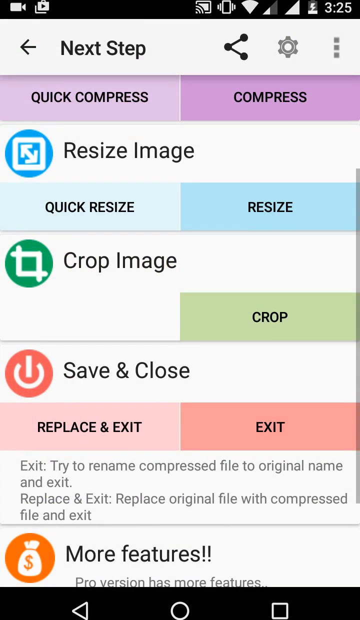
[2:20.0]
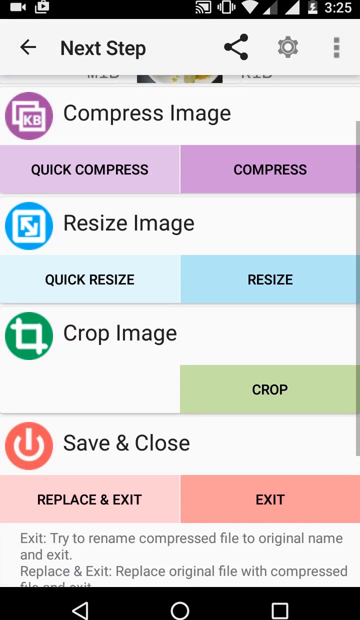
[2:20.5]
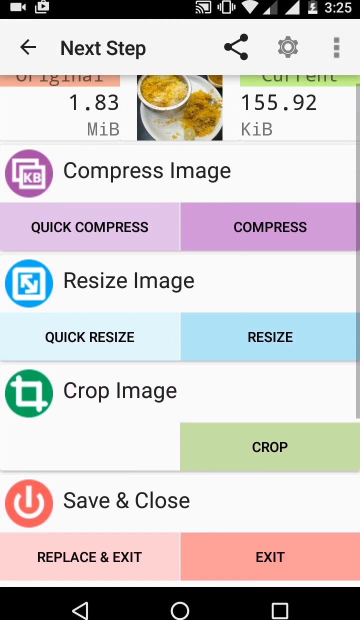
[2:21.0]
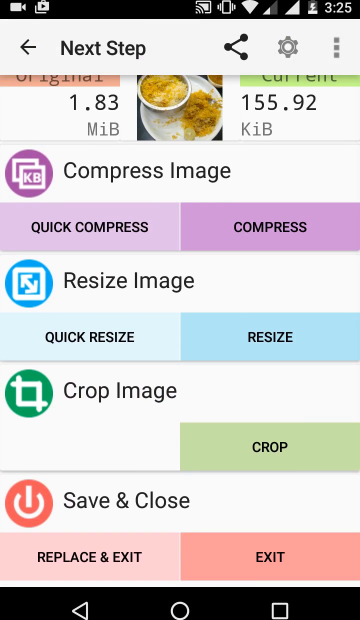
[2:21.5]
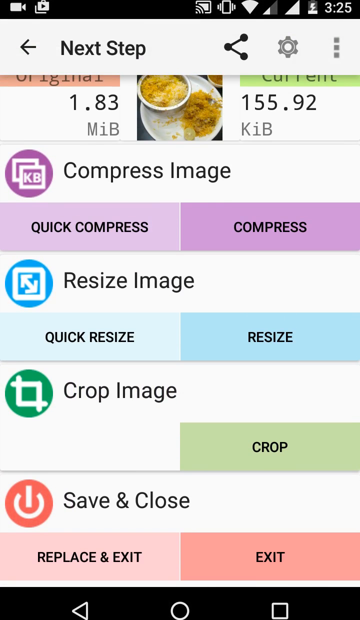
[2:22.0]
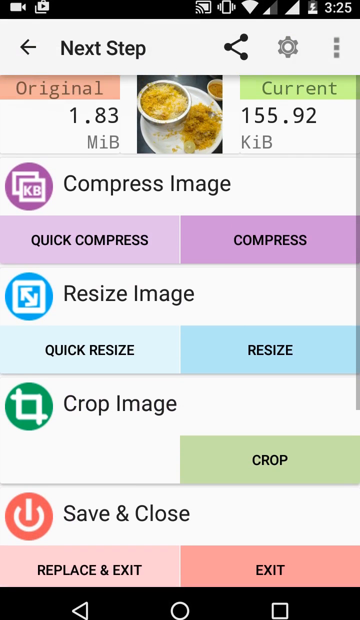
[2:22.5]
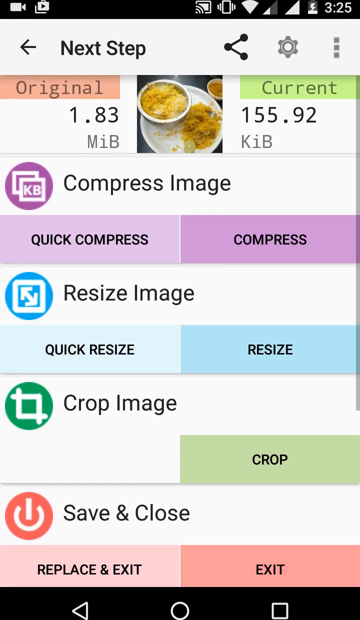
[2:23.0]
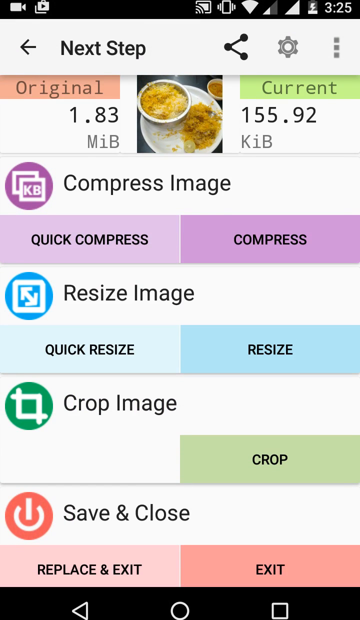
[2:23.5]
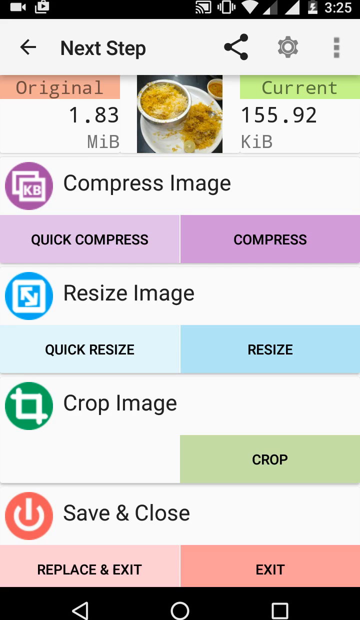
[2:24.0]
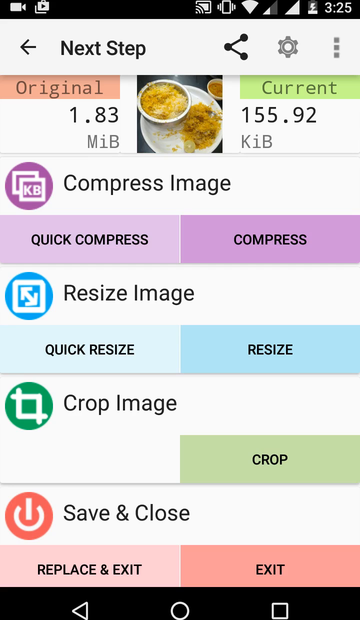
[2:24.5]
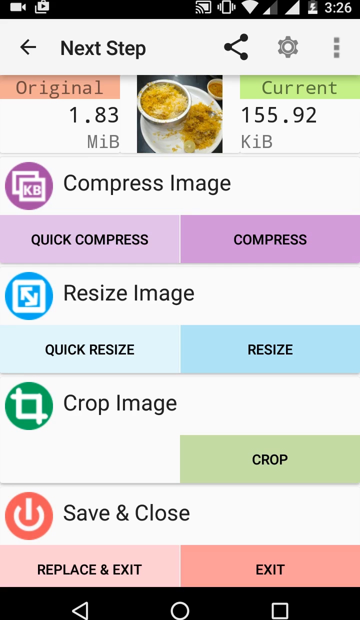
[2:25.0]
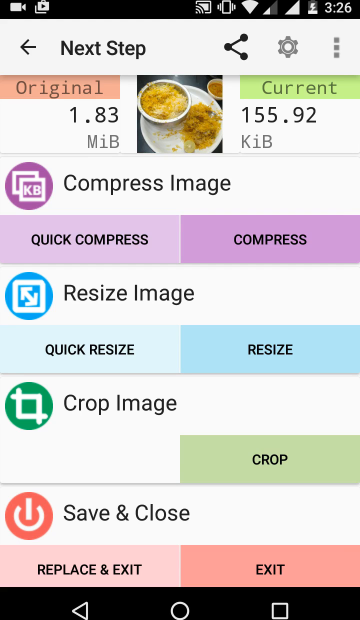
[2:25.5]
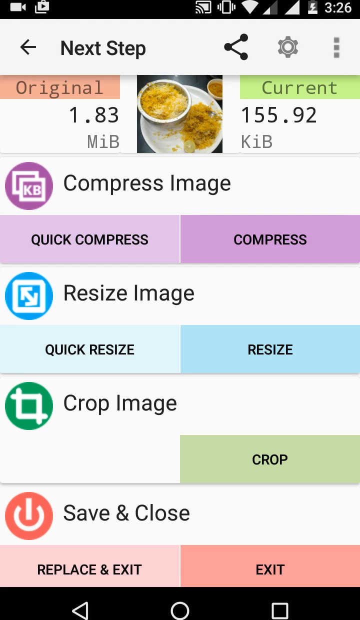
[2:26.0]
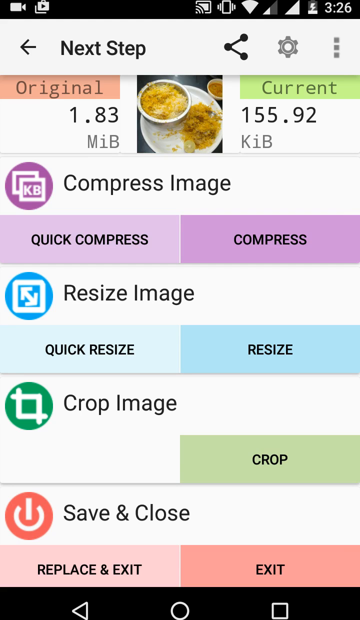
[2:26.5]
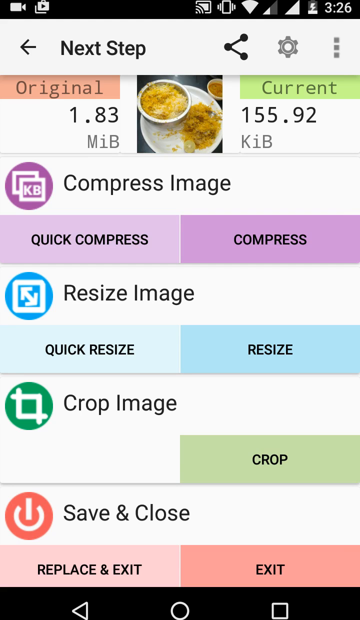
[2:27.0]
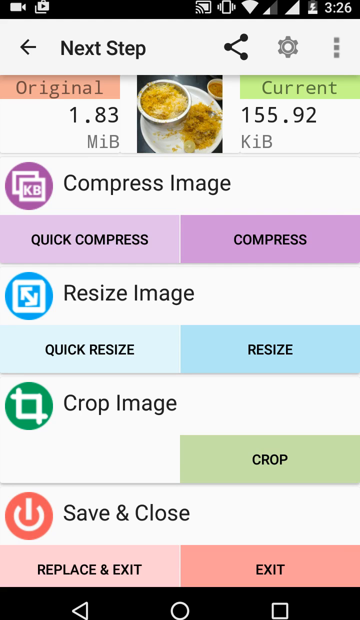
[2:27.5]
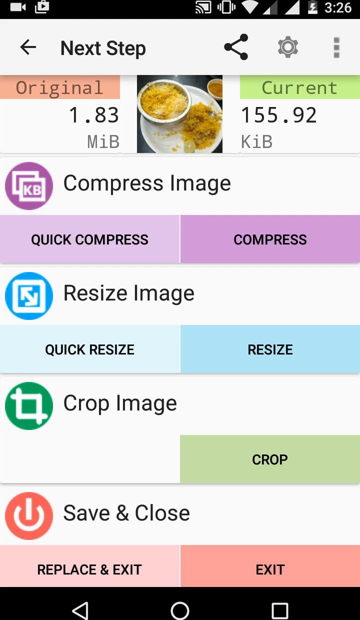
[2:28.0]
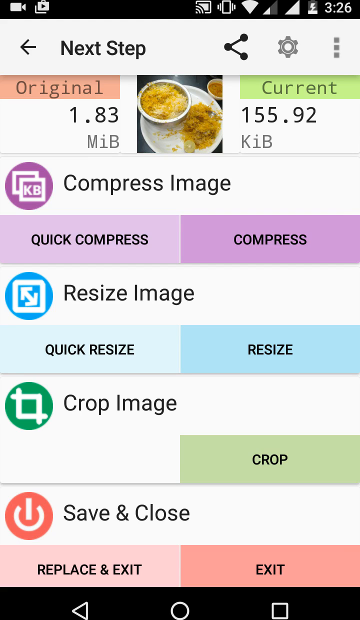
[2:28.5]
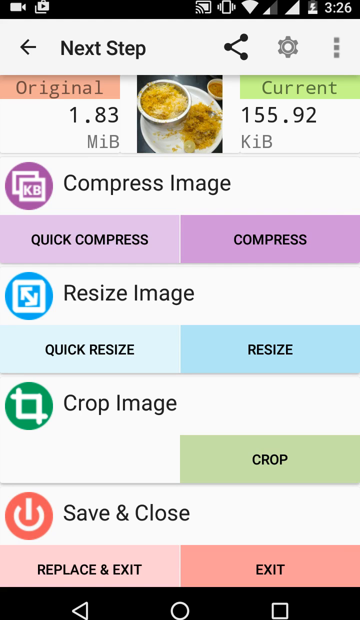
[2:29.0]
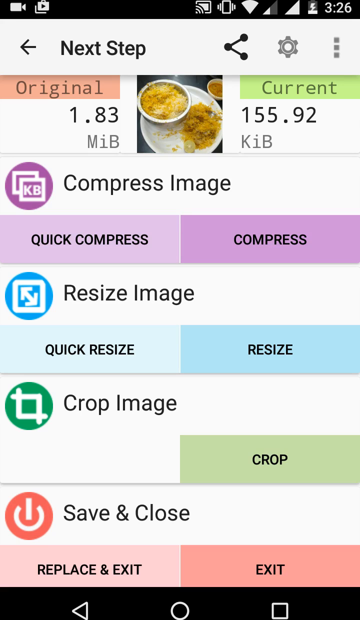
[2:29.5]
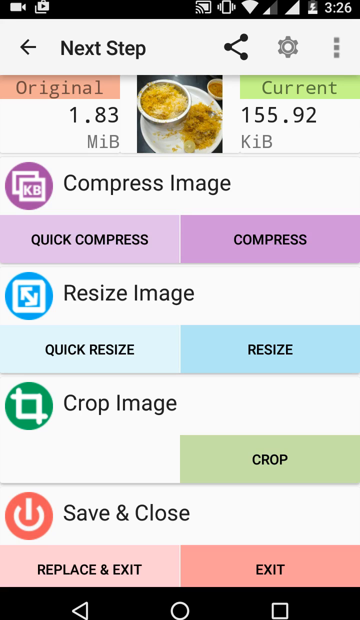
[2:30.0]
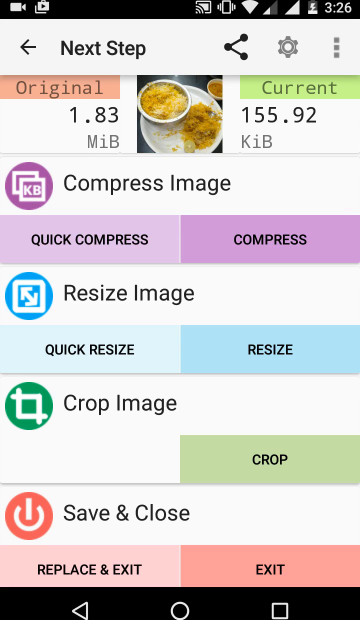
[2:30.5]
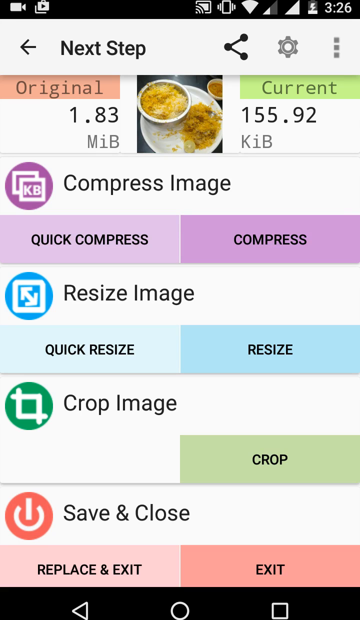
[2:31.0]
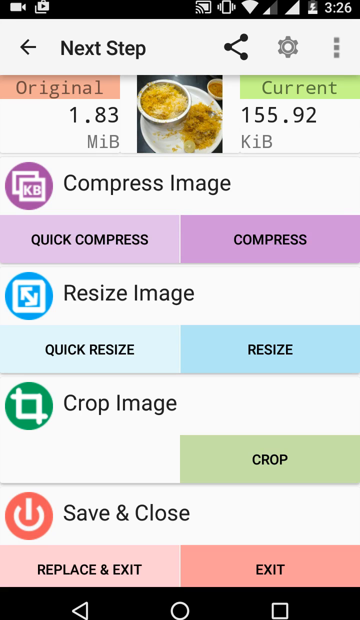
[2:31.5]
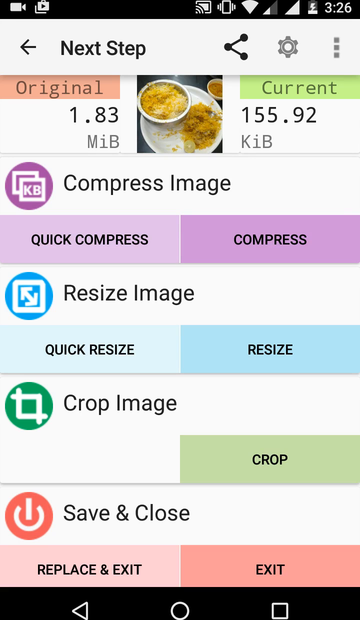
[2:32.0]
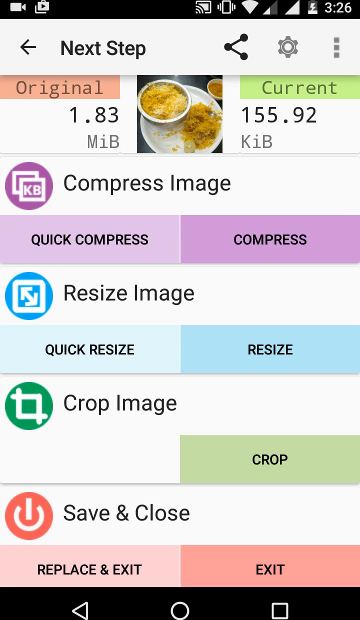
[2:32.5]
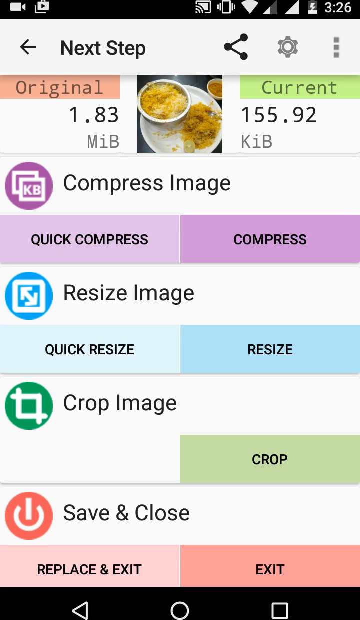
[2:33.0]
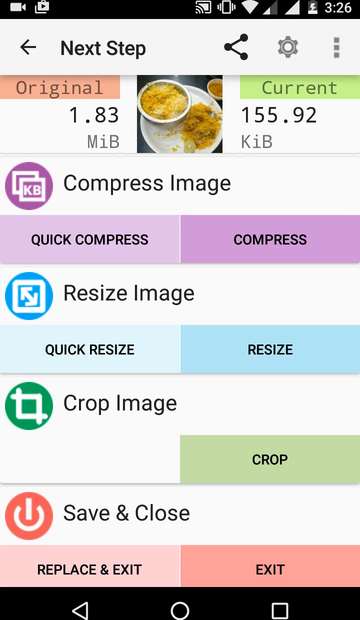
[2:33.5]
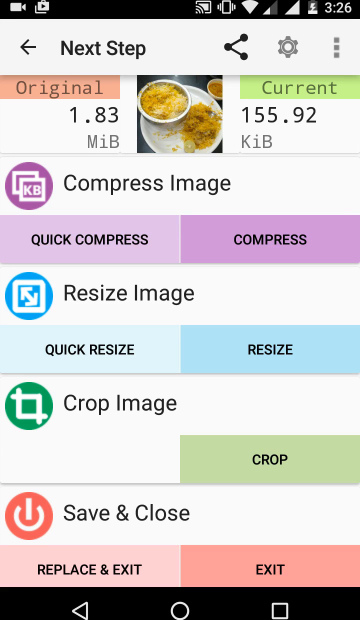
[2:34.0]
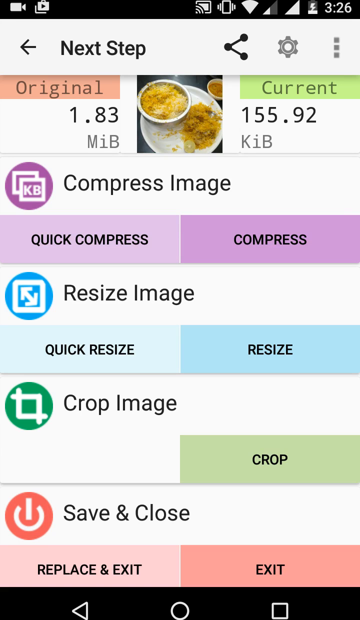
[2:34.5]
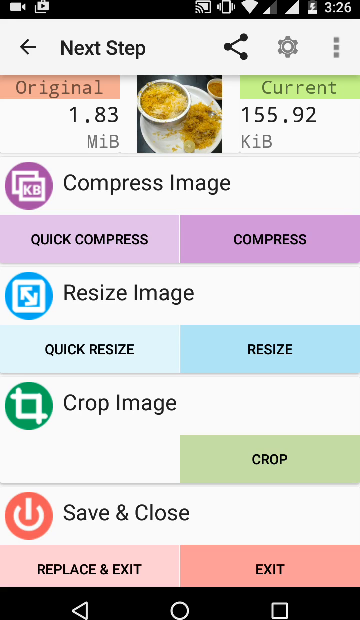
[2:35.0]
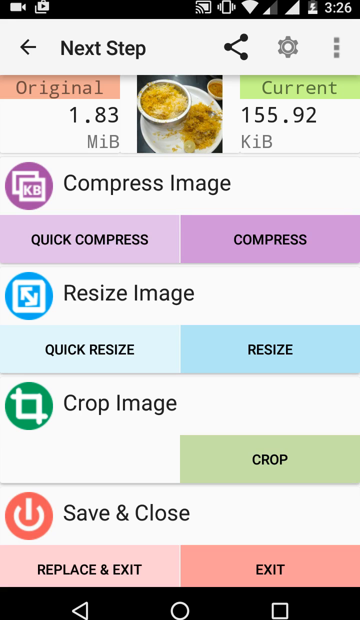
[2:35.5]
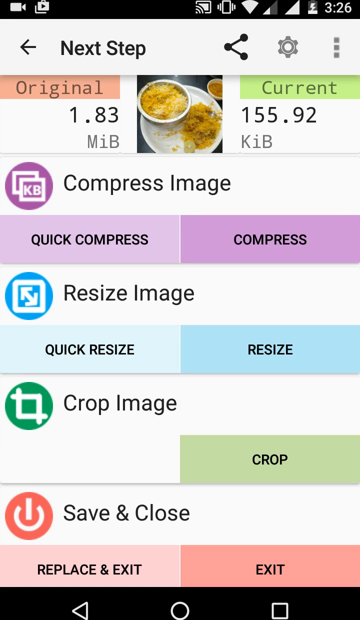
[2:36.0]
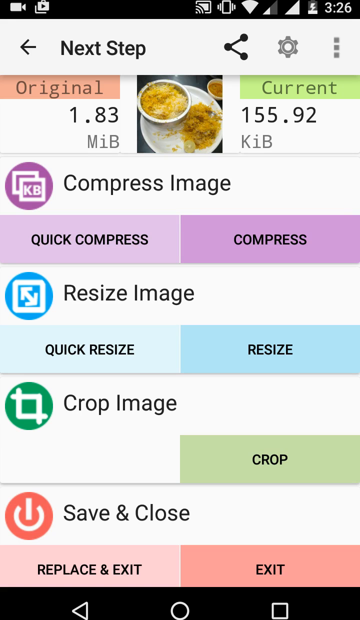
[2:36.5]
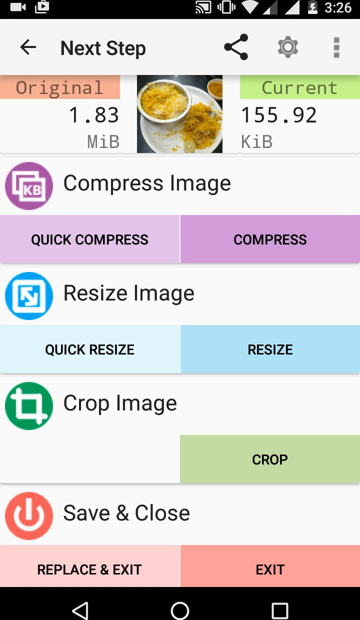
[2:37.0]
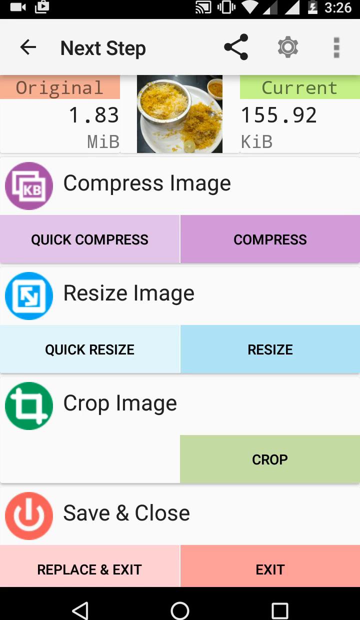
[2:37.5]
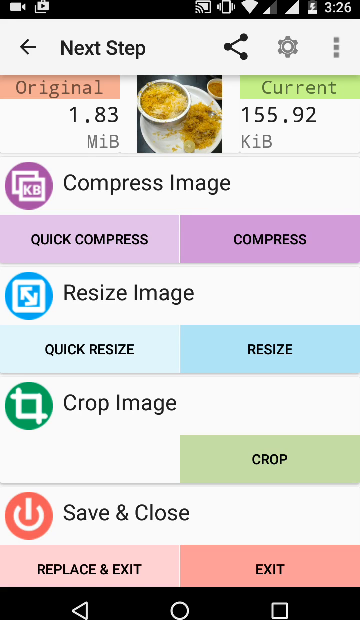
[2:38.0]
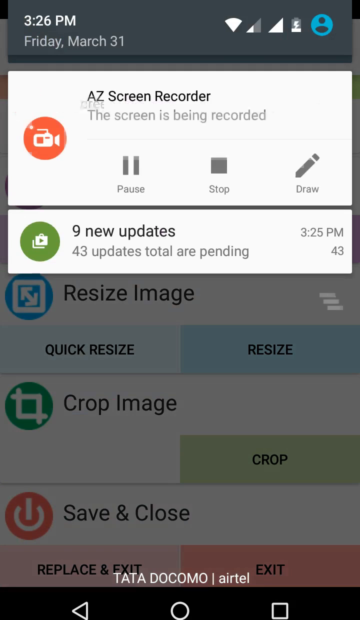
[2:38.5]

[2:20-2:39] The Photo Compress app shows the finished photo, with the original size showing 1.83 megabytes and the current size 1.92 kilobytes, and all the options shown underneath. A screen recorder appears, indicating the screen is being recorded, and some updates come in on the phone during the recording.